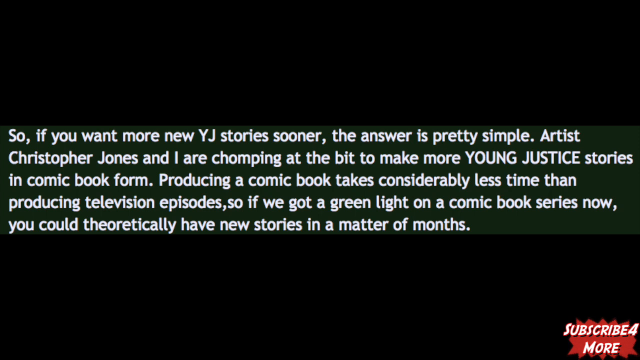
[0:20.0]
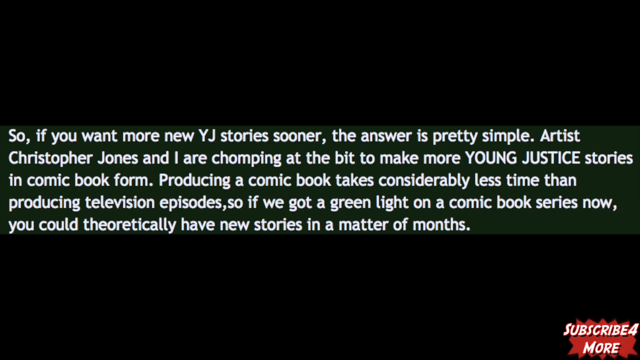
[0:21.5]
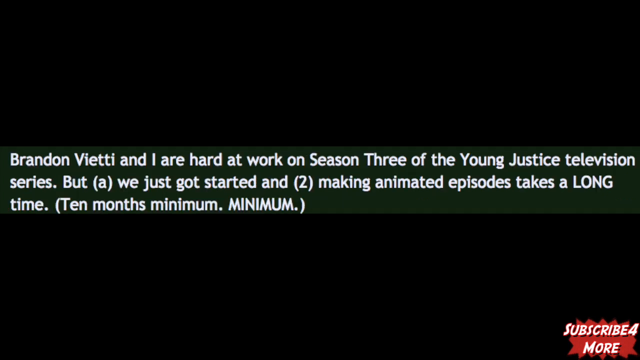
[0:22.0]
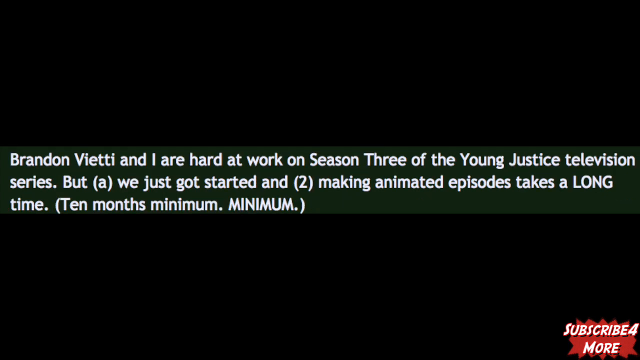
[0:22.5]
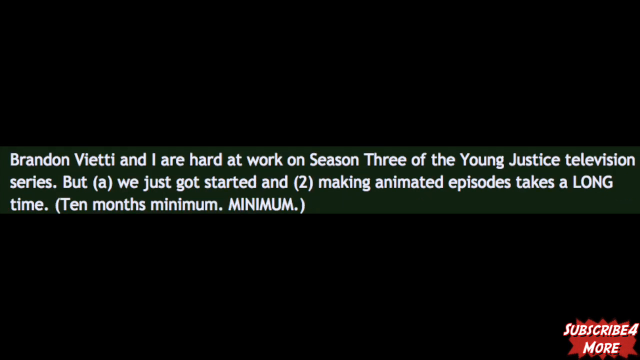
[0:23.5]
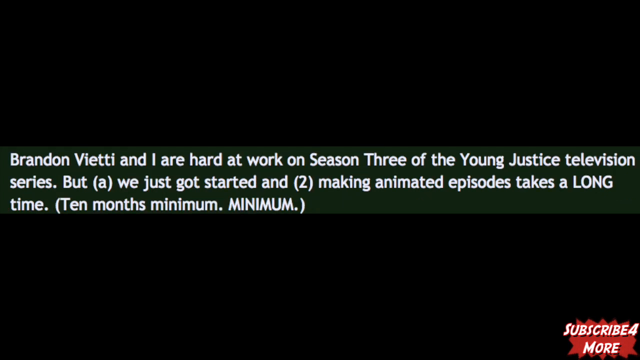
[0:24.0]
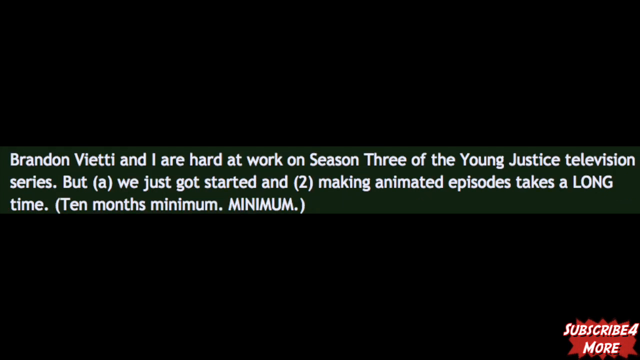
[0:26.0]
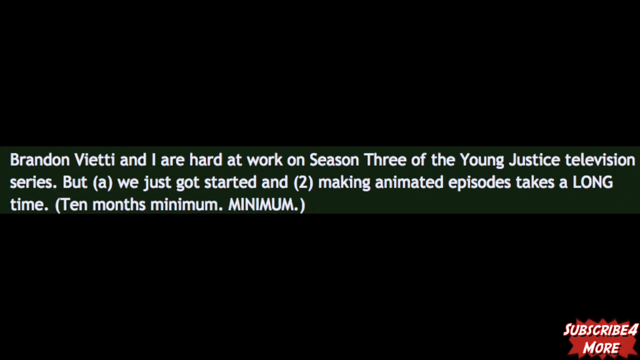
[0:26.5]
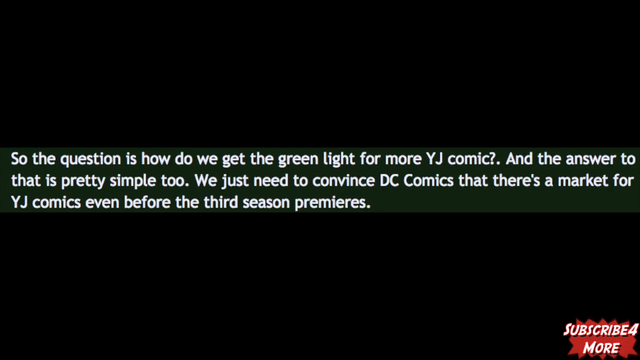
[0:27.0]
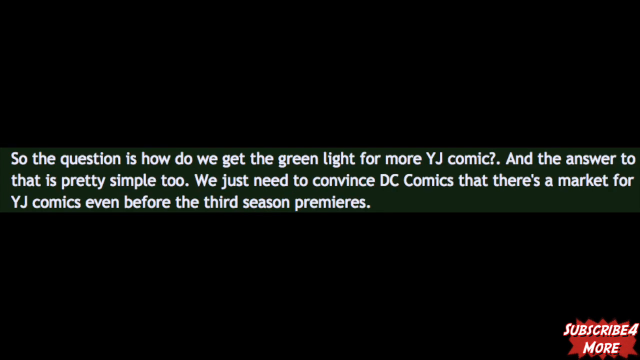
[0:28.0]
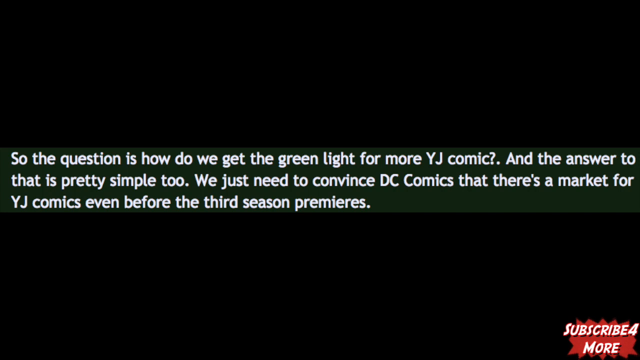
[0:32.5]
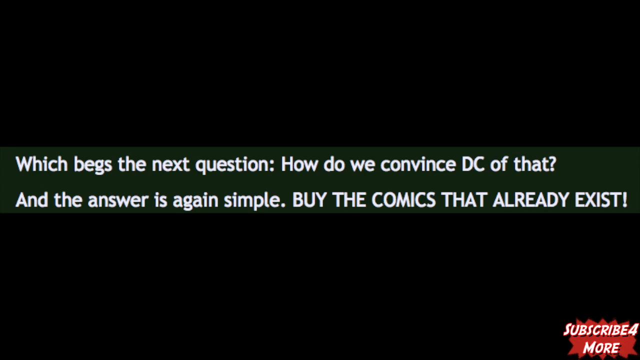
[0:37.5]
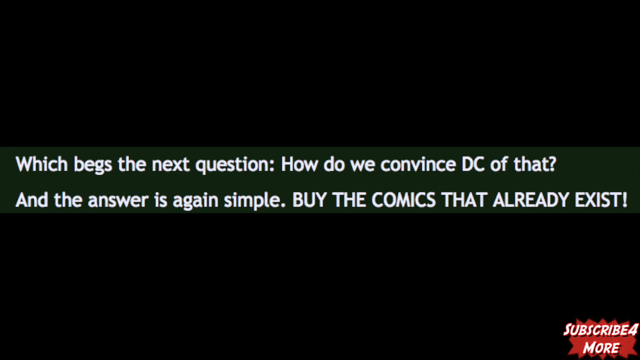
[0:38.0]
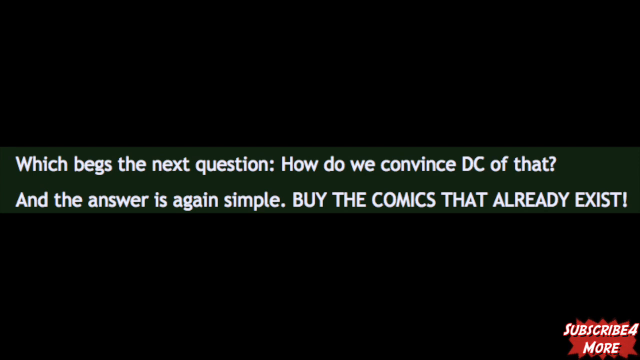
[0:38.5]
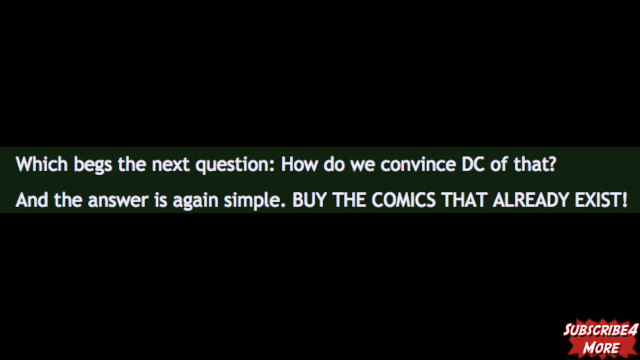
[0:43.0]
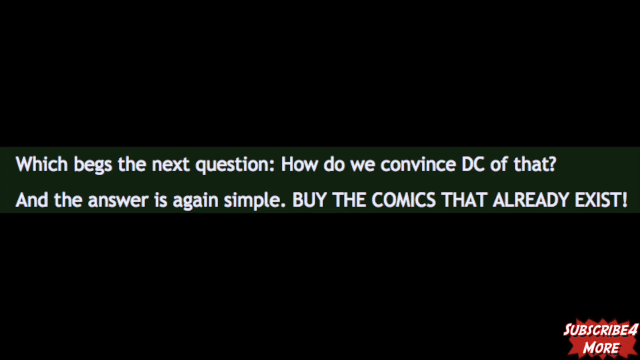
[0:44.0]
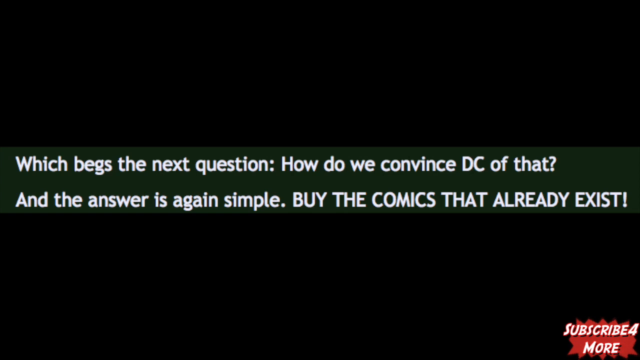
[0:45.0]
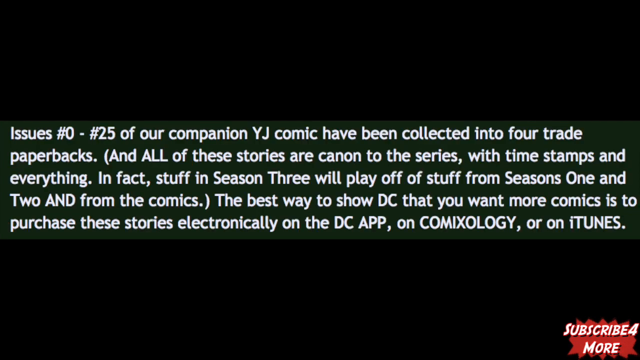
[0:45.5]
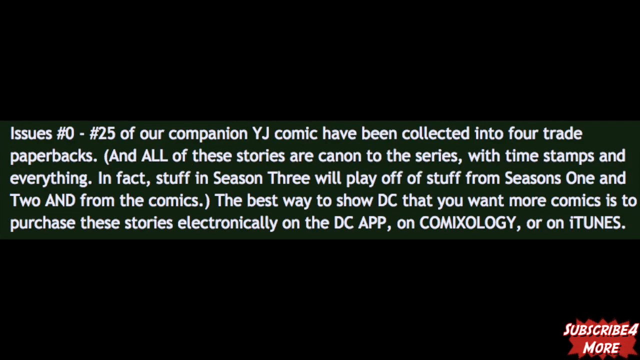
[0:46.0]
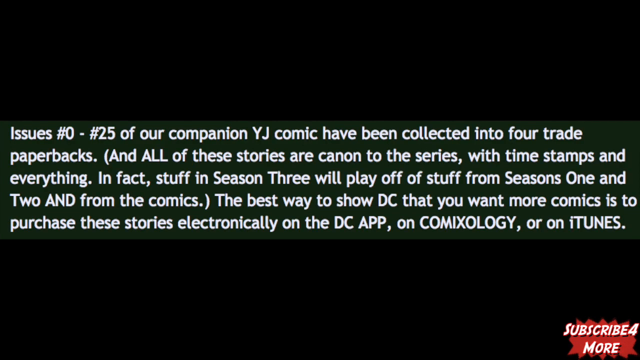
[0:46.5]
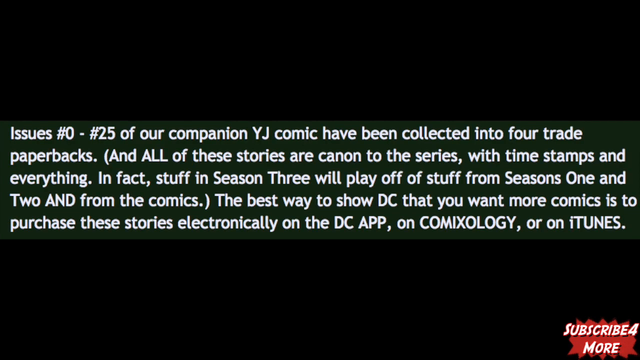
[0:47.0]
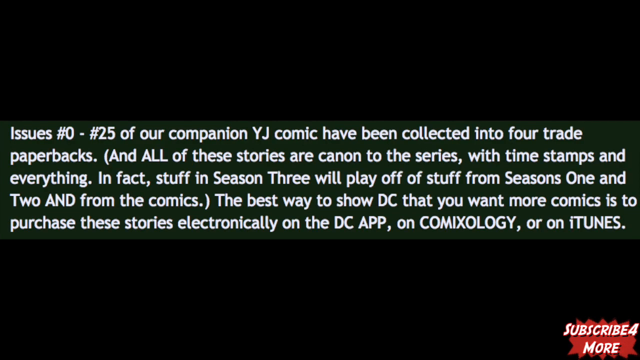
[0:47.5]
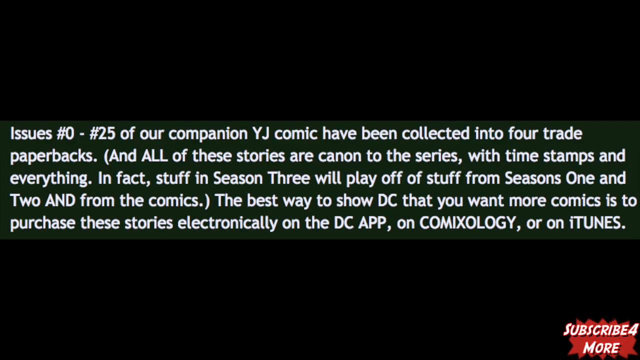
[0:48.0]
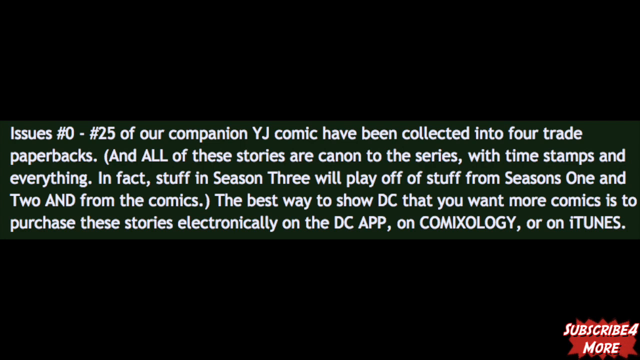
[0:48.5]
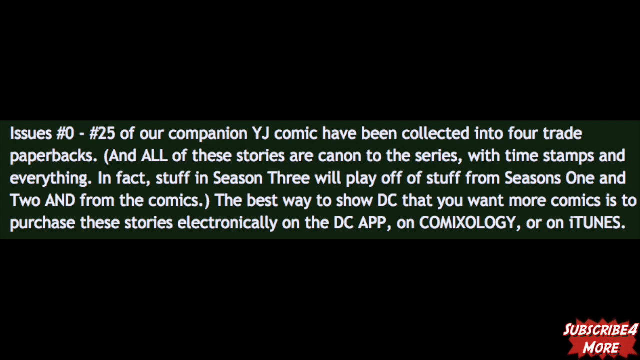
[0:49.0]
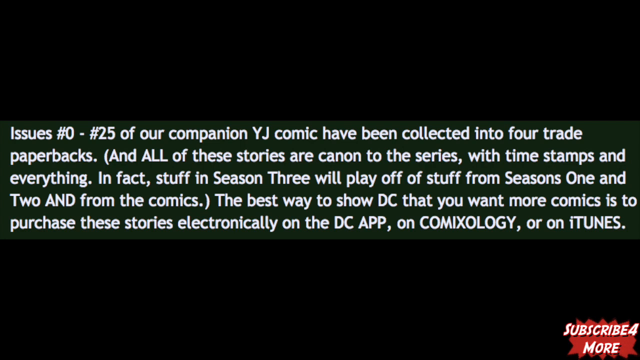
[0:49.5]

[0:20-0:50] The text changes to show the names Christopher Jones, the artist, and Brandon Vietti as the co-creators of the series. The text talks about working on season three of this comic and about wanting to convince DC Comics to work with them so they can get it out and distributed. The text changes again to ask the question "how do we convince DC of that?" Another screen follows with more text about getting DC Comics interested in what they are doing. The answer is then given in all caps: "buy the comics that already exist." The message apparently encourages the audience to keep purchasing the comics to show DC Comics that they are in demand.